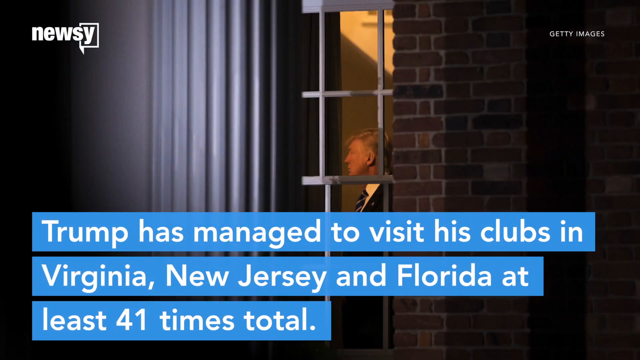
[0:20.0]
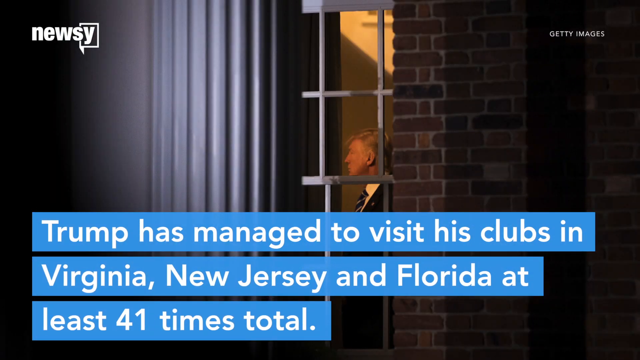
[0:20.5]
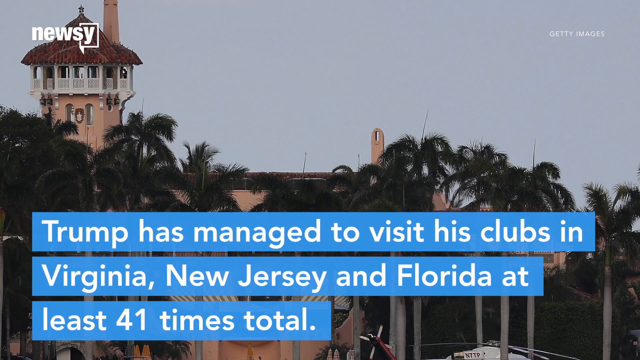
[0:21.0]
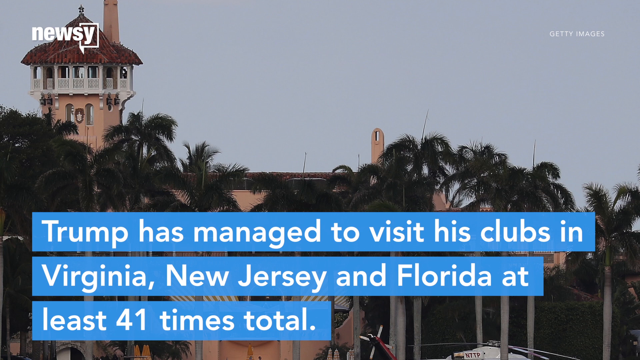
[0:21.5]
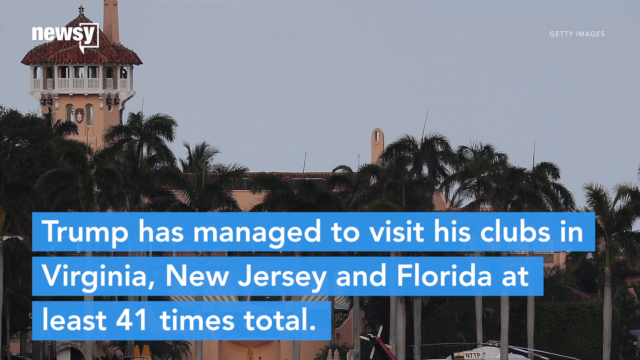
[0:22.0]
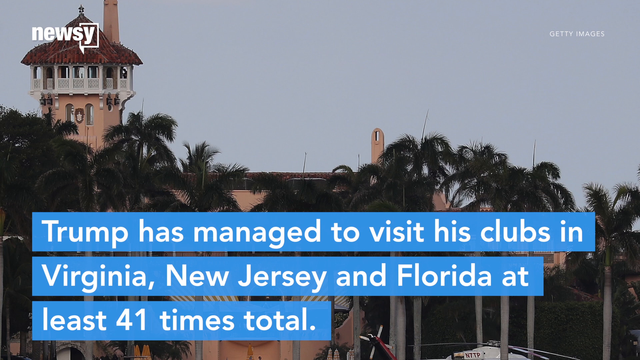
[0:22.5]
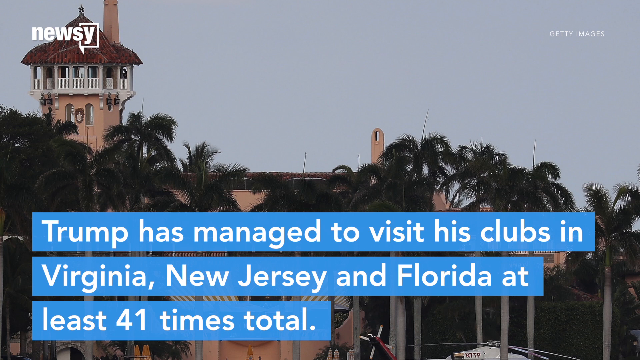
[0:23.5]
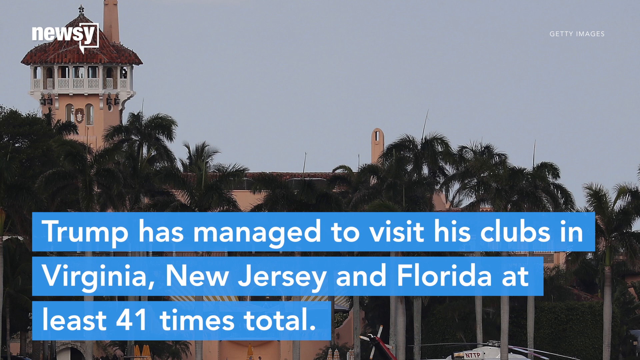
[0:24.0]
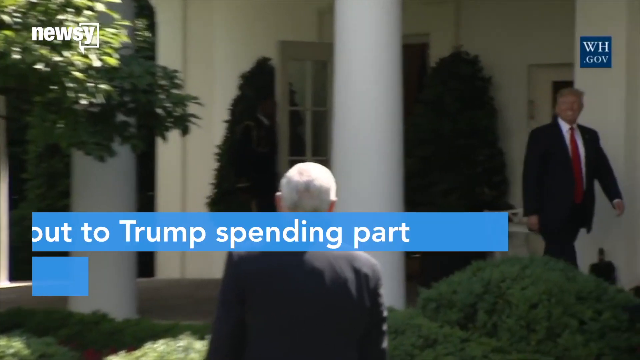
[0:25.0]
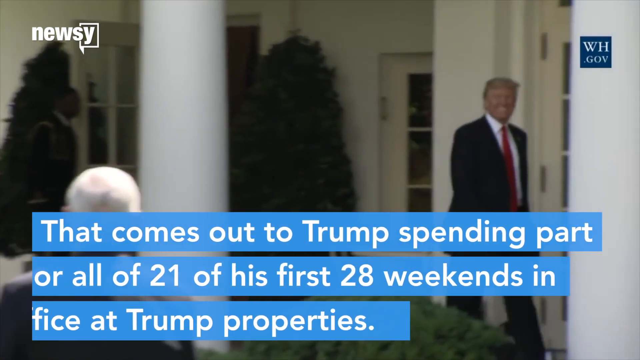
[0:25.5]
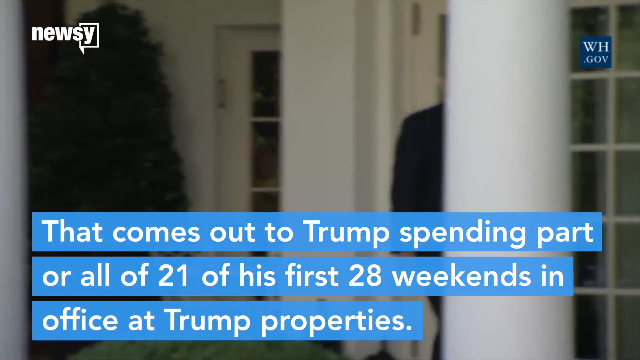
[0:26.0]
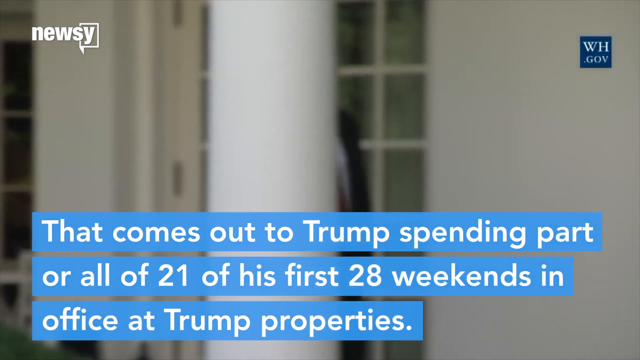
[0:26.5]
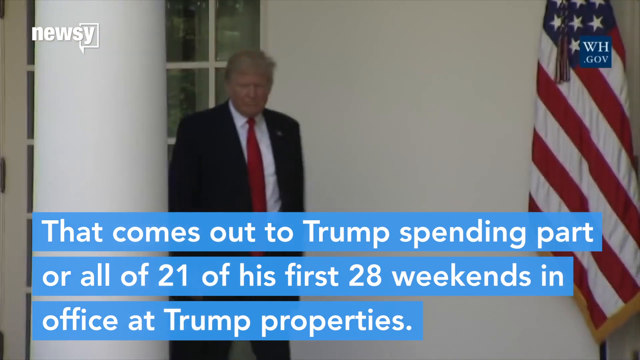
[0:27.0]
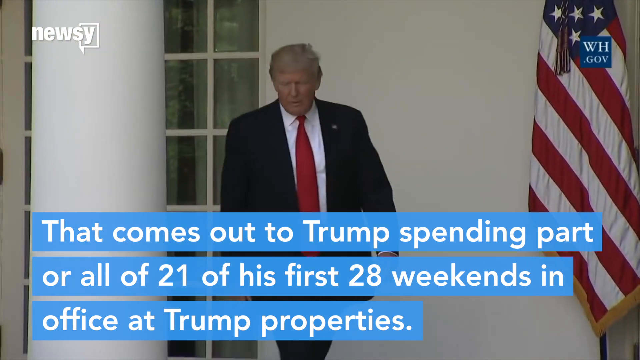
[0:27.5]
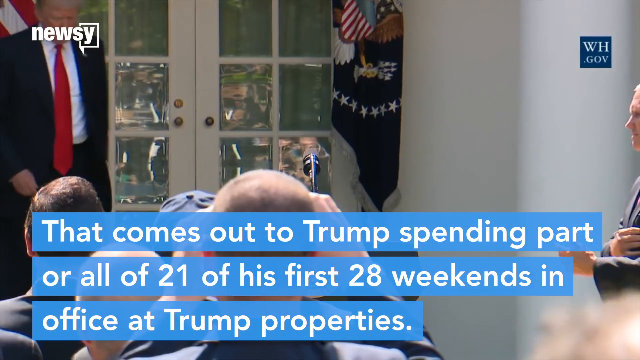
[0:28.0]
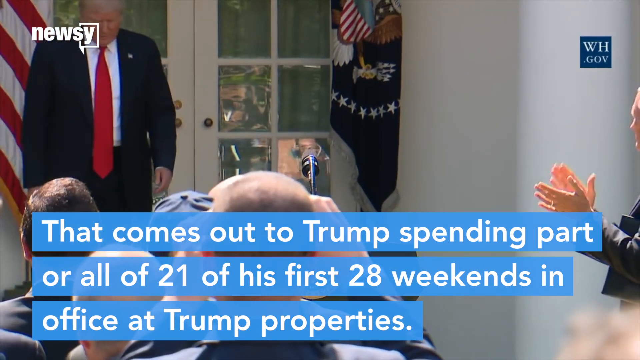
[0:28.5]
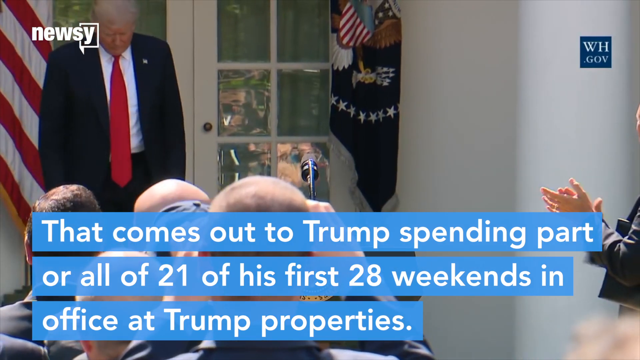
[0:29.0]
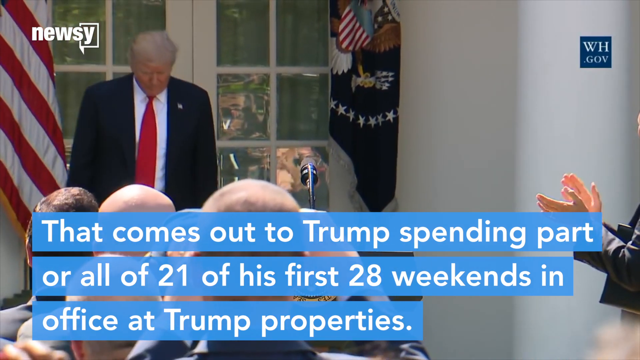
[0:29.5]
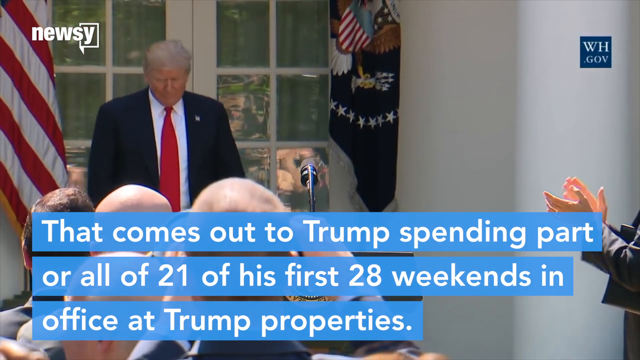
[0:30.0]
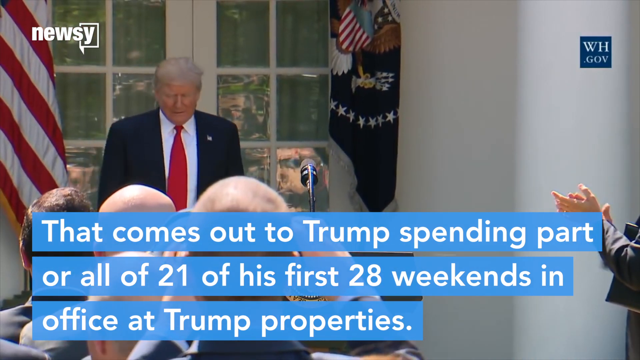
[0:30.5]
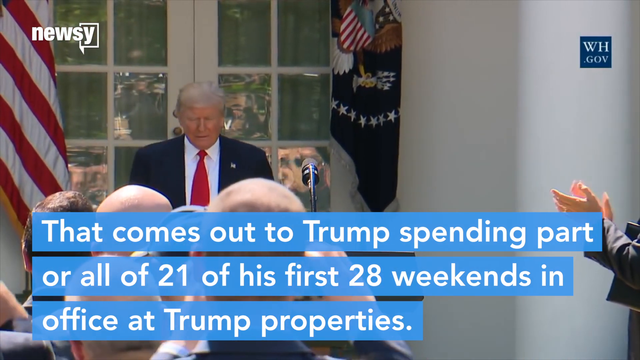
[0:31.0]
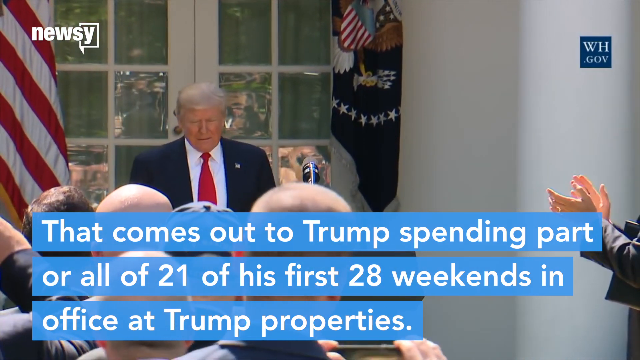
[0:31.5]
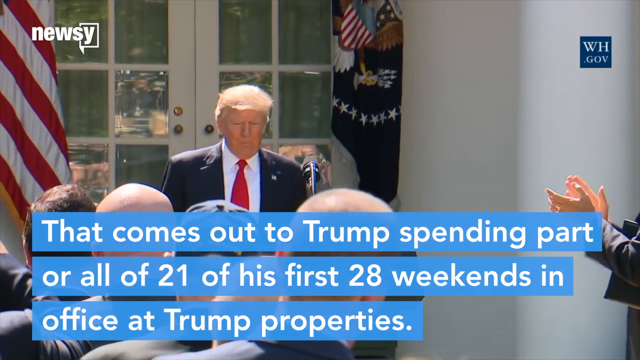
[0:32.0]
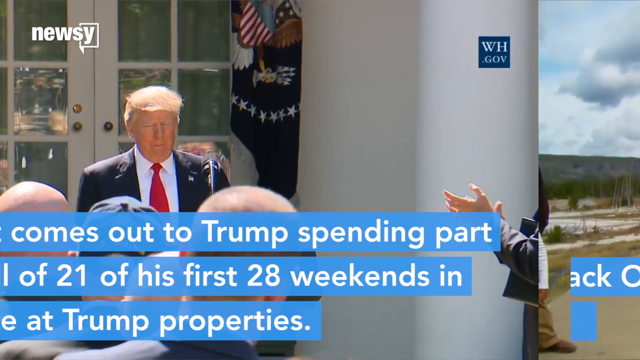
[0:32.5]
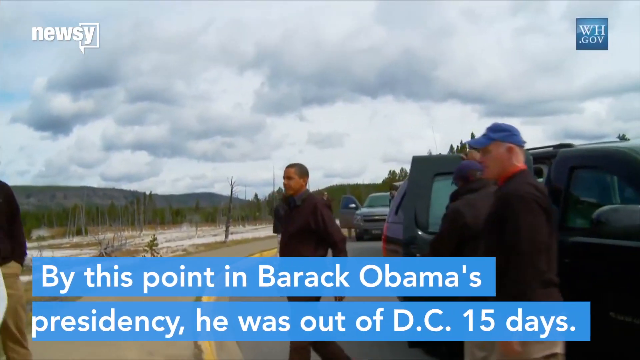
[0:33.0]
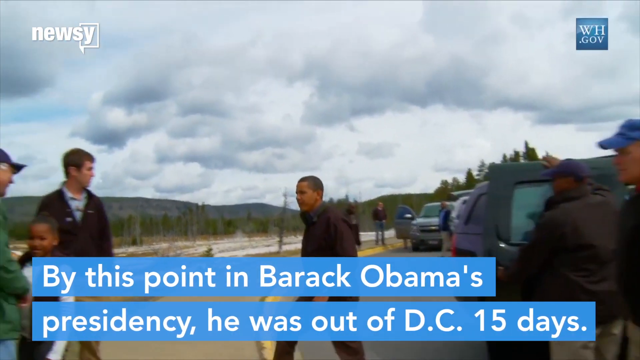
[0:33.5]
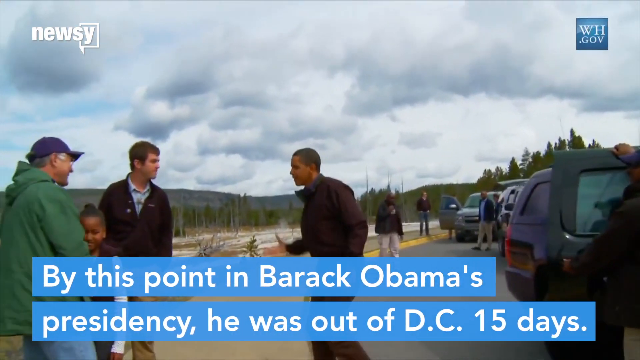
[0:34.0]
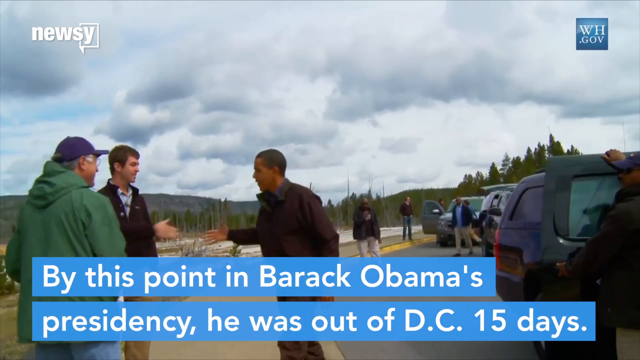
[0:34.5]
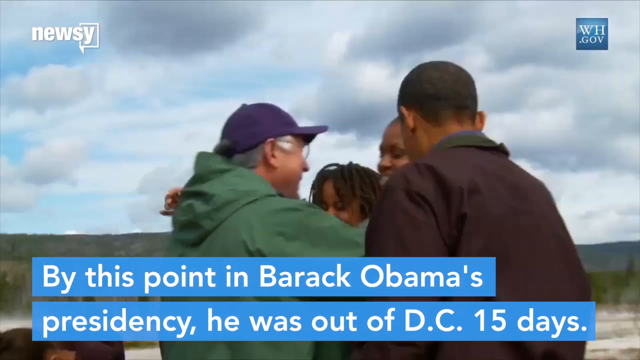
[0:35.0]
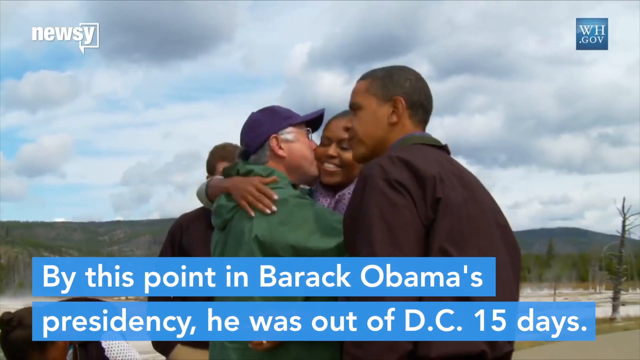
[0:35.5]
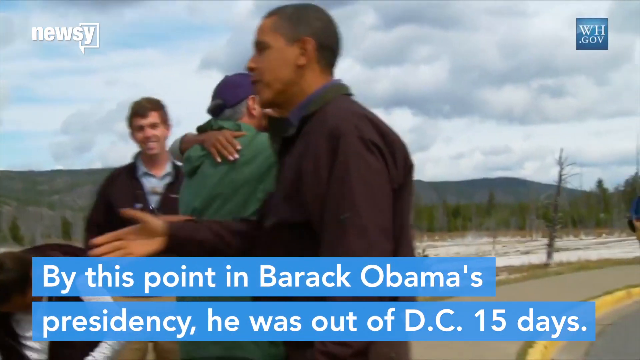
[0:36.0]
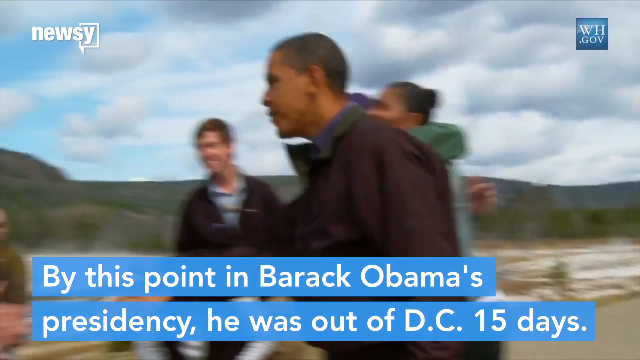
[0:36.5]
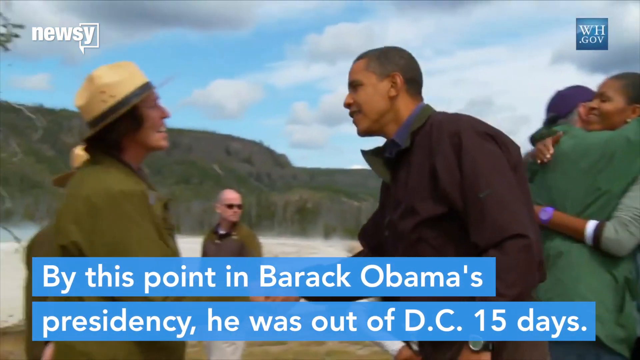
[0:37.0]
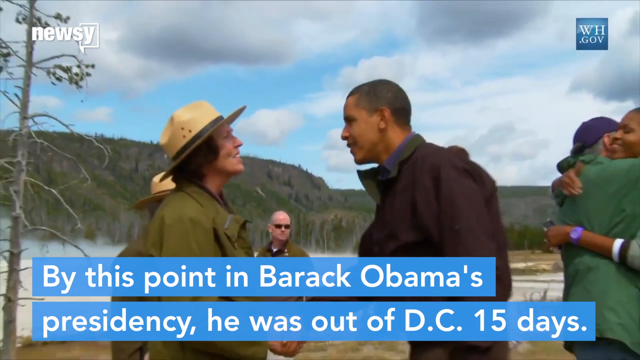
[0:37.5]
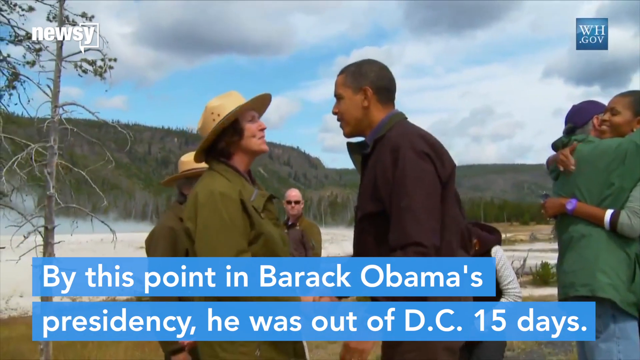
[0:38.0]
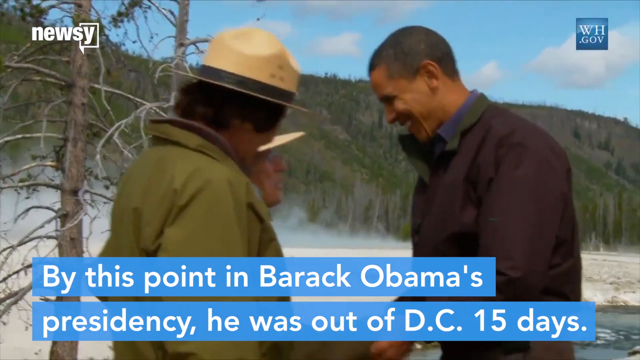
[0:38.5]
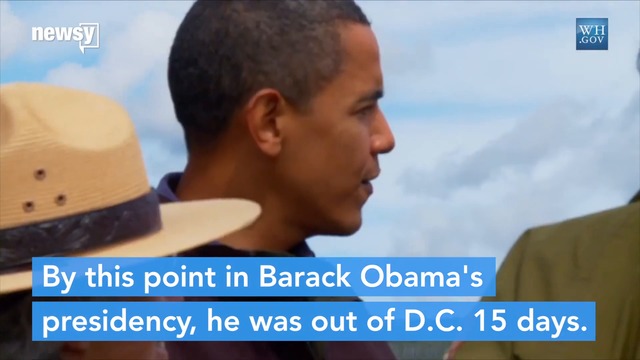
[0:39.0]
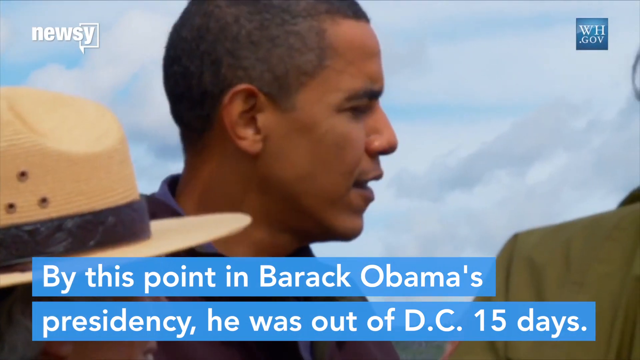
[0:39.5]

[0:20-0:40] A man is seen in the background through a window of a beautiful old house, with a caption below reading "Trump has managed to visit his clubs in Virginia, New Jersey and Florida at least 41 times in total." The setting changes to several beautiful buildings or structures with beautiful trees, and a caption reads "Trump has managed to visit his clubs in Virginia, New Jersey." Trump comes out of a building and walks downstairs. The scene then shifts to former president Barack Obama, with a caption reading "by this point in Barack Obama's presidency he was out of D.C. 15 days," drawing a comparison.